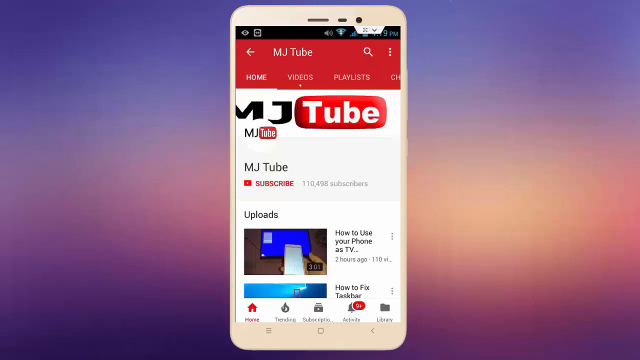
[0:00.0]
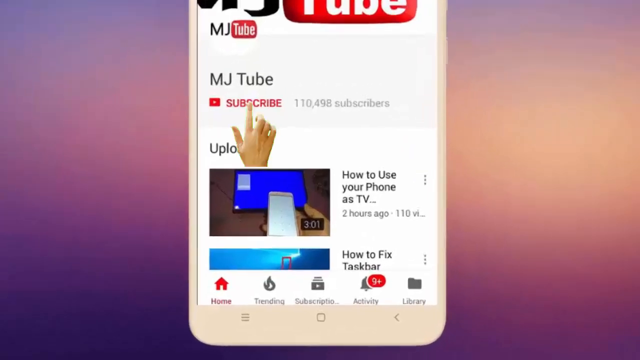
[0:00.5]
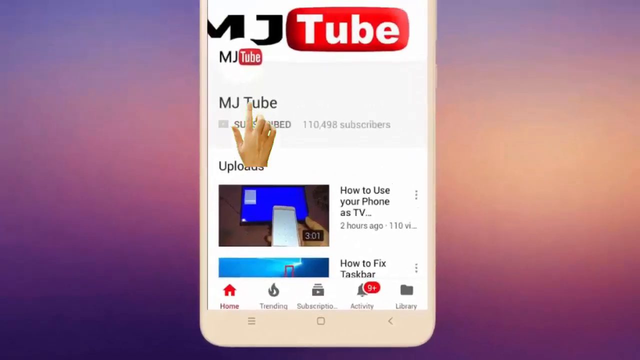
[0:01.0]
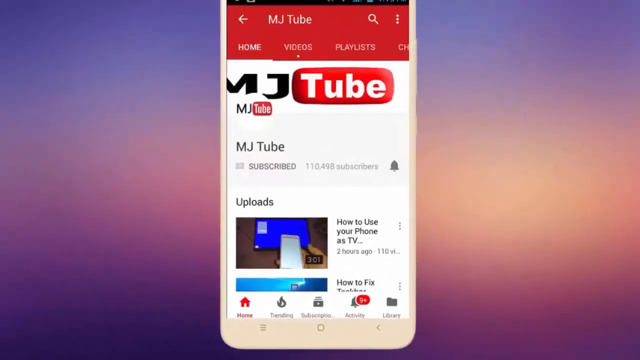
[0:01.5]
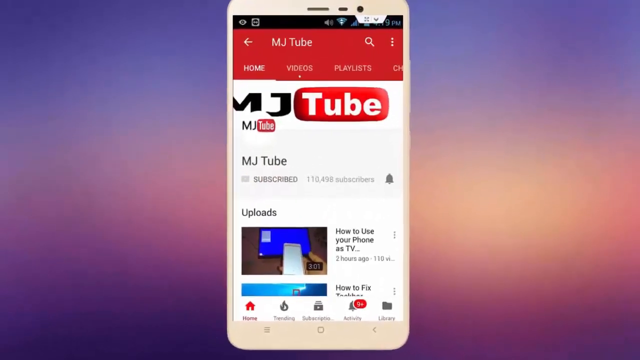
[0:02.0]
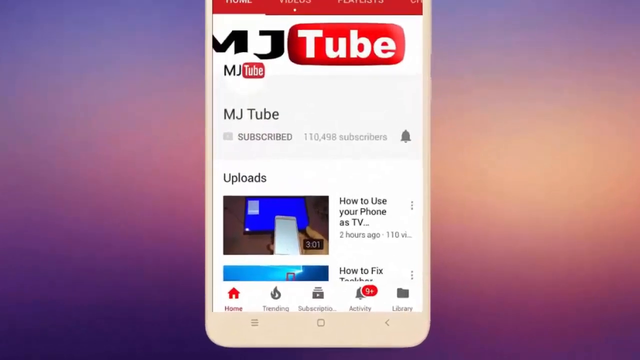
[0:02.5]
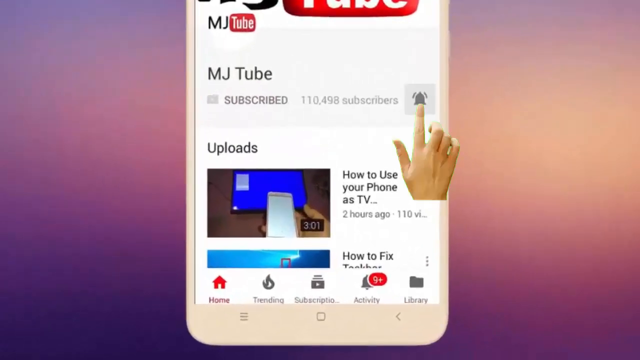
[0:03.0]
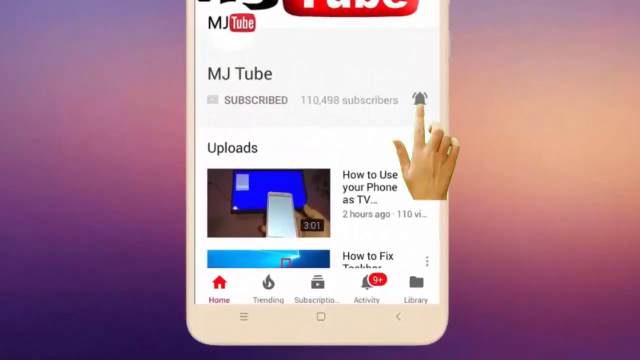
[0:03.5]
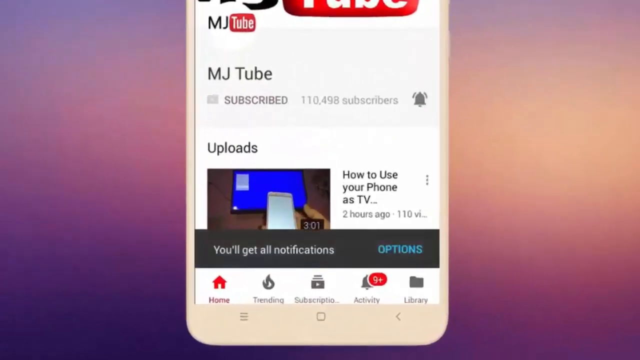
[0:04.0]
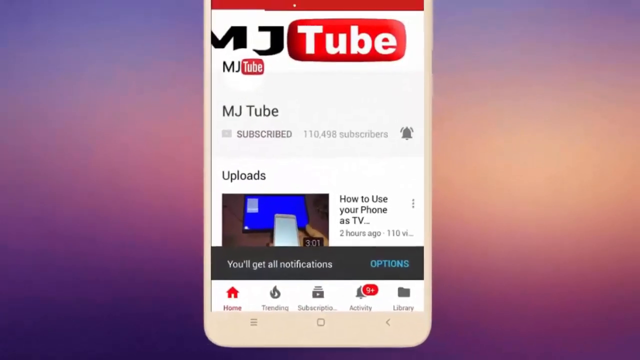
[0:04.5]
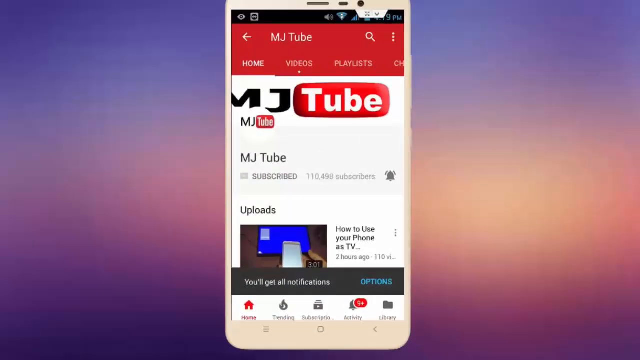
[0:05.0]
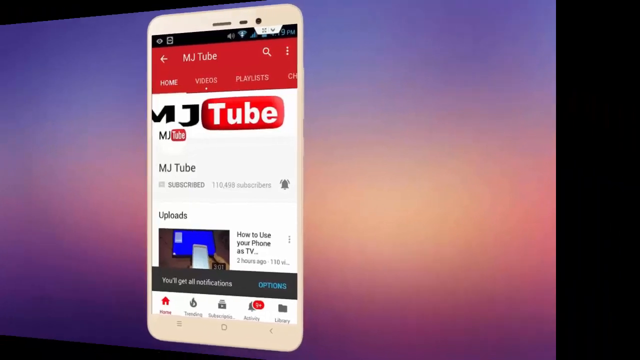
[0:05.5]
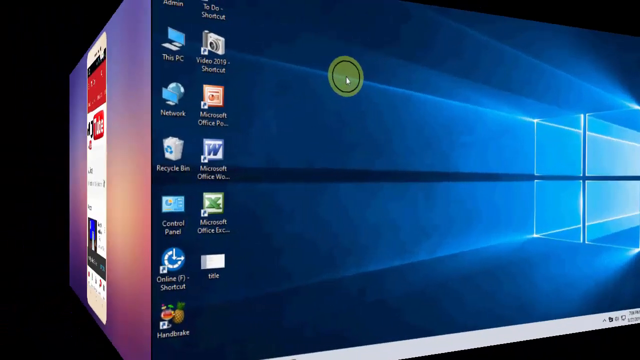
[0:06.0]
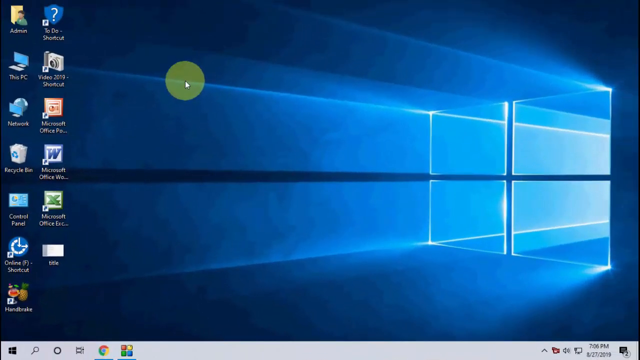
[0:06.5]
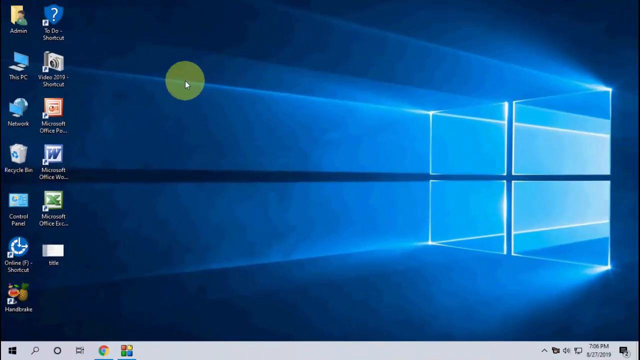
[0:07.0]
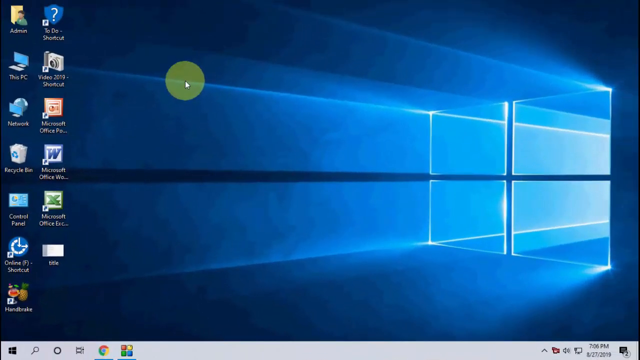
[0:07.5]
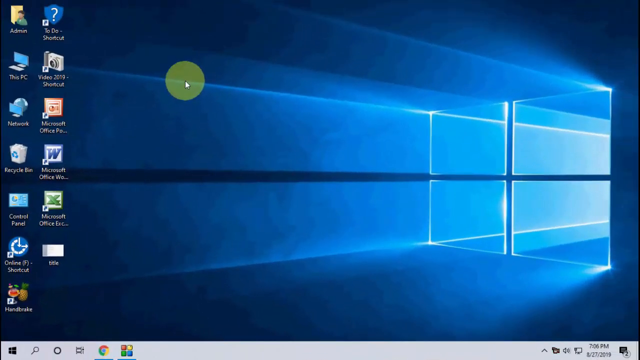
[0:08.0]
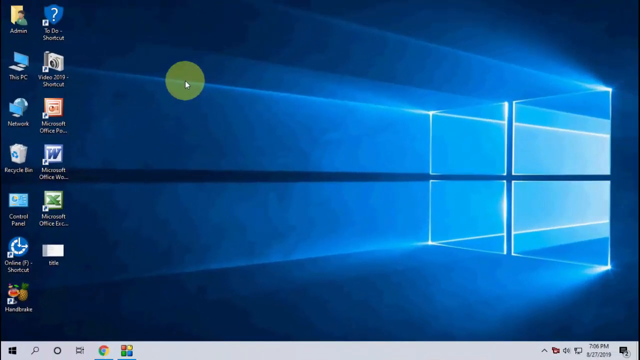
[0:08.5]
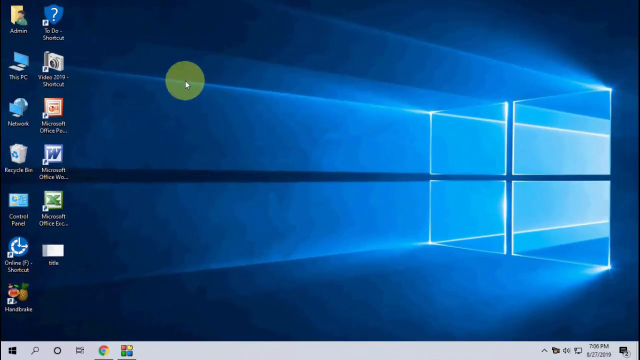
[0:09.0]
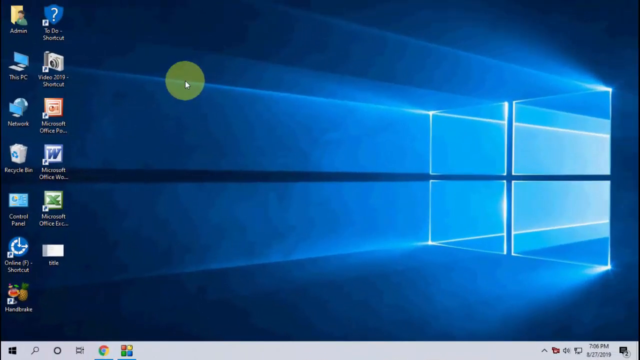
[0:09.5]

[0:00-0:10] A cell phone is set in the center of the screen, with a blurry sunset in the background behind it. On the phone's screen is a channel page that looks like one from YouTube, called MJTube, showing uploads: the first upload is how to use your phone as a TV, and the second is how to fix a task bar. The camera zooms in on the phone, giving a closer view of what is on it. A finger appears on the phone's screen and taps MJTube. The image zooms out to the original view, then zooms in again, and the same finger clicks on a bell used to subscribe; the subscribed number is 110,498. The image zooms back out, and the whole screen rotates as the original image shifts out of view to the left, revealing a computer desktop with two rows of icons on the left-hand side. The first row has seven icons and the second has six. The desktop background shows something similar to a Windows logo in blue with light rays coming through it.